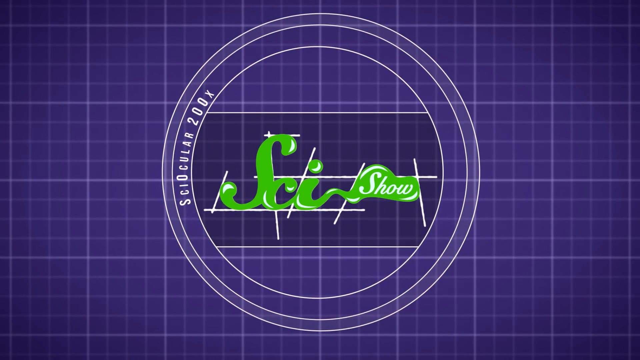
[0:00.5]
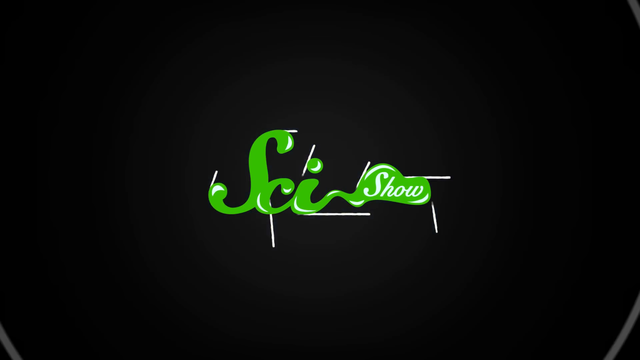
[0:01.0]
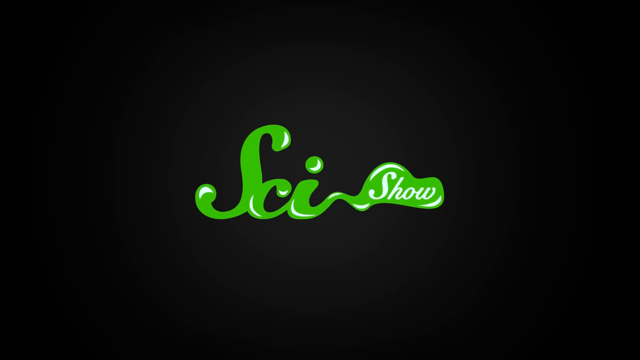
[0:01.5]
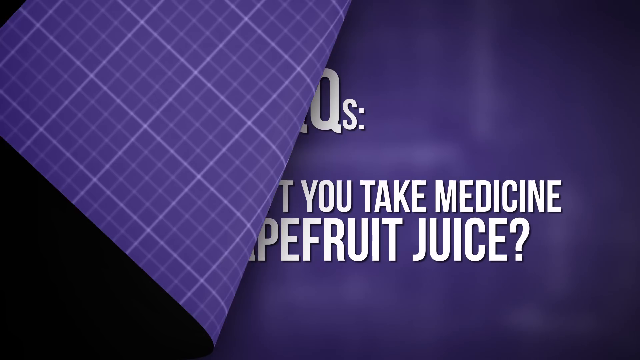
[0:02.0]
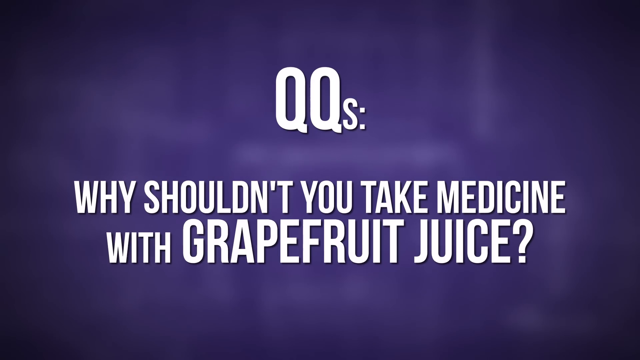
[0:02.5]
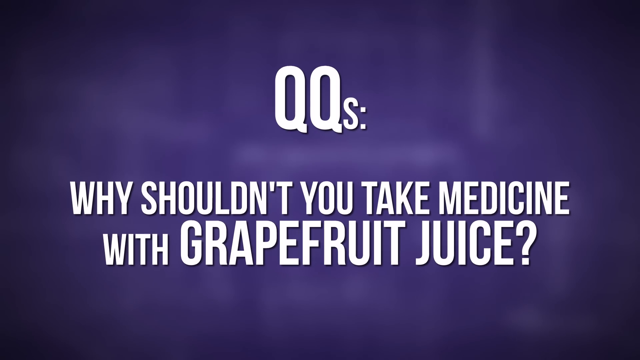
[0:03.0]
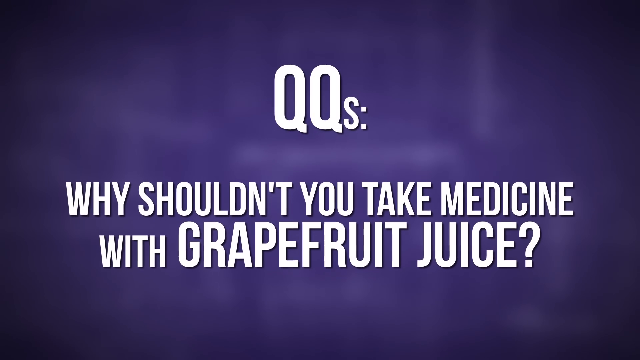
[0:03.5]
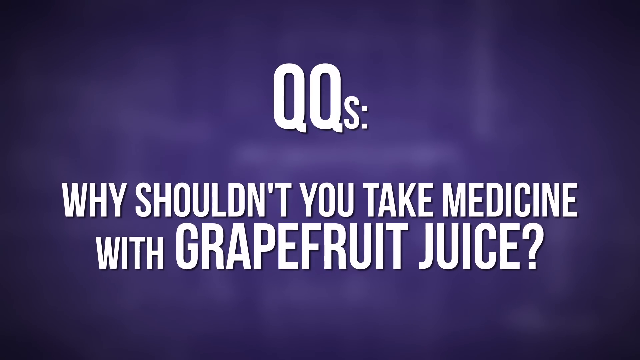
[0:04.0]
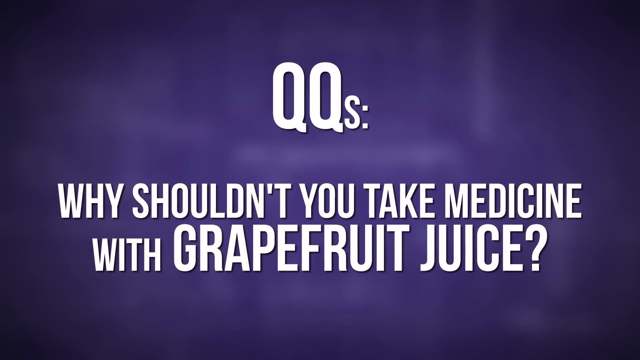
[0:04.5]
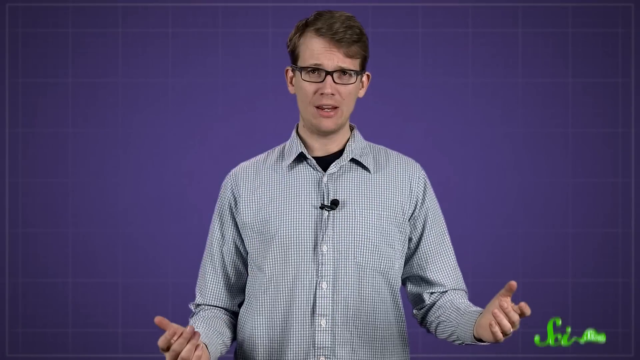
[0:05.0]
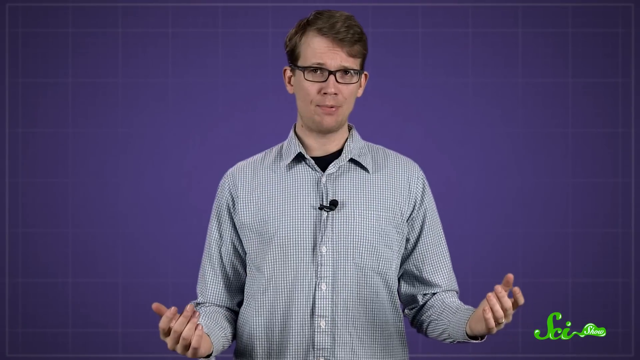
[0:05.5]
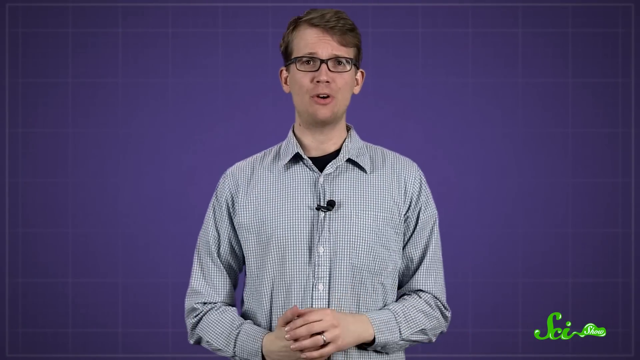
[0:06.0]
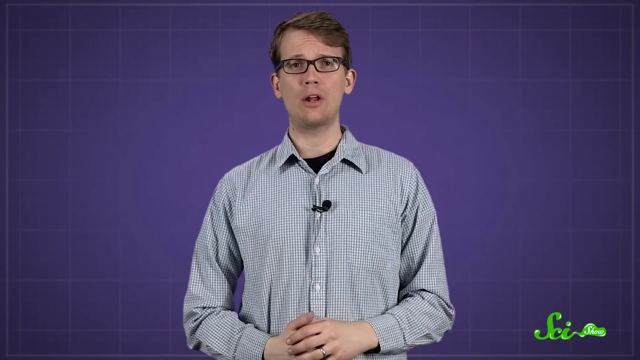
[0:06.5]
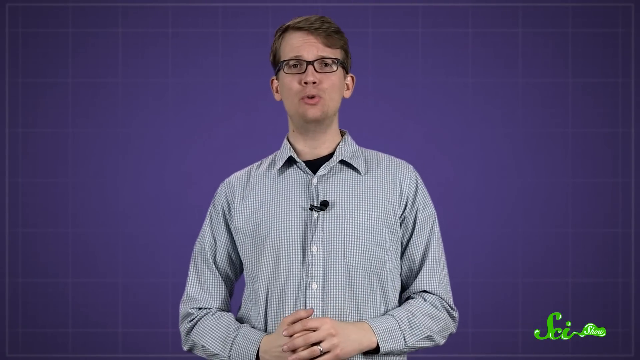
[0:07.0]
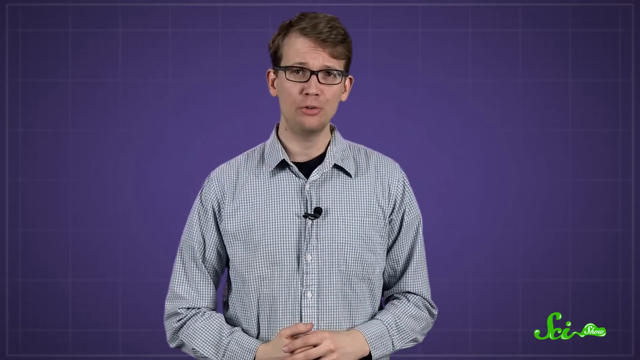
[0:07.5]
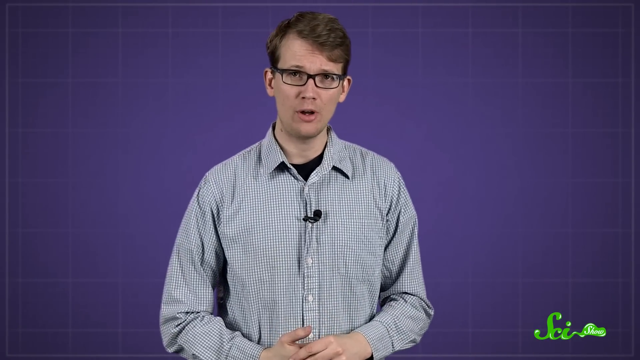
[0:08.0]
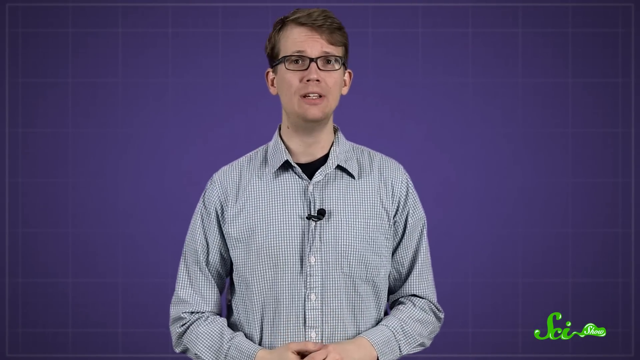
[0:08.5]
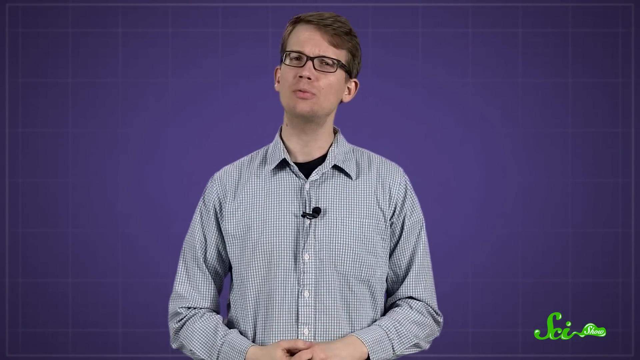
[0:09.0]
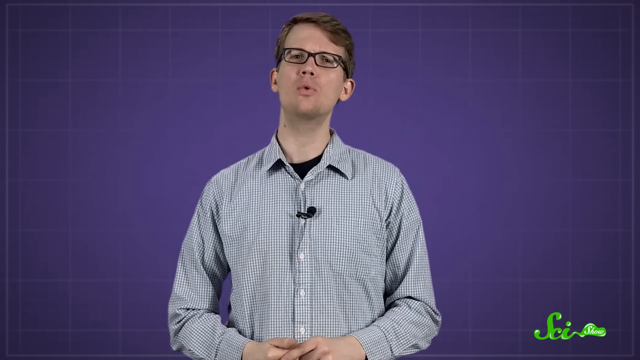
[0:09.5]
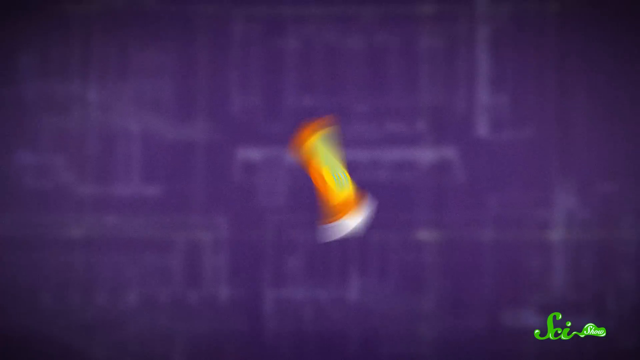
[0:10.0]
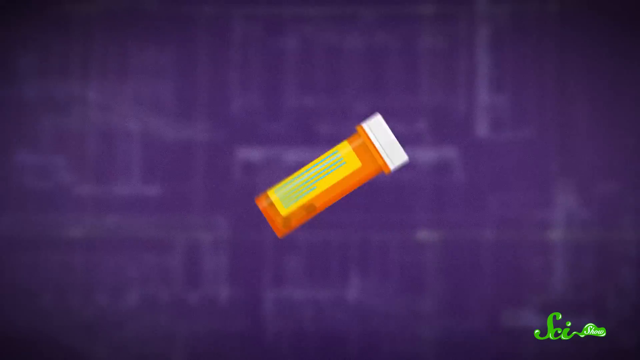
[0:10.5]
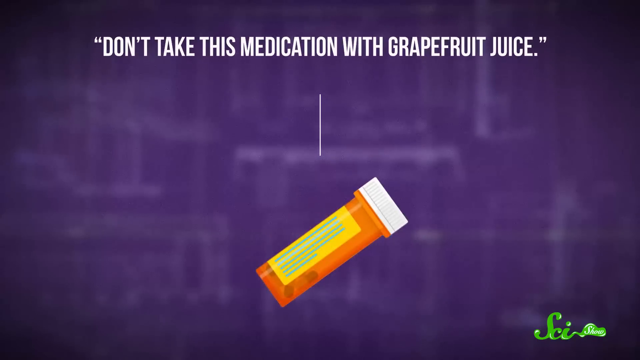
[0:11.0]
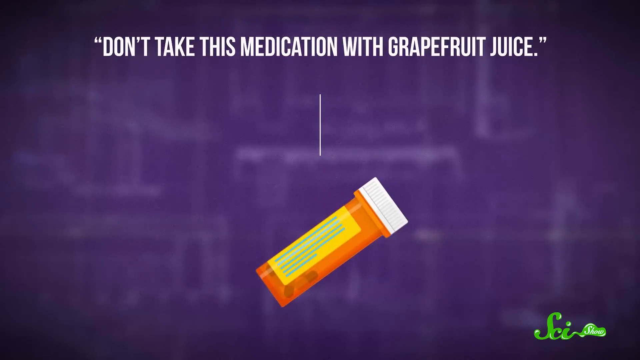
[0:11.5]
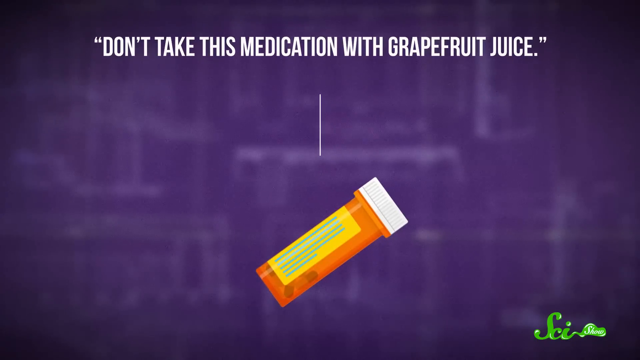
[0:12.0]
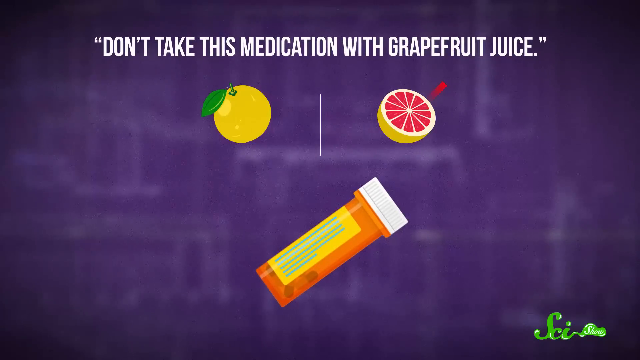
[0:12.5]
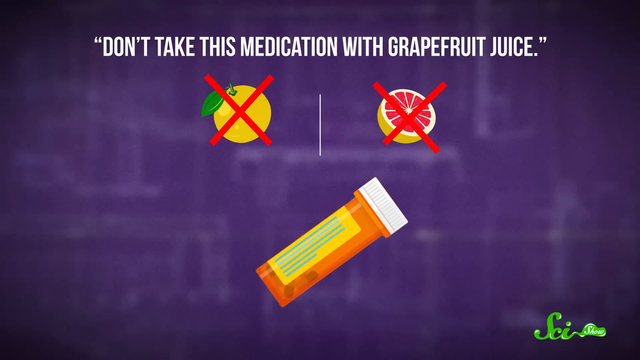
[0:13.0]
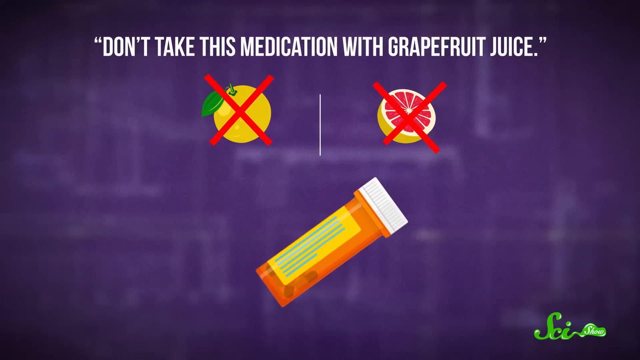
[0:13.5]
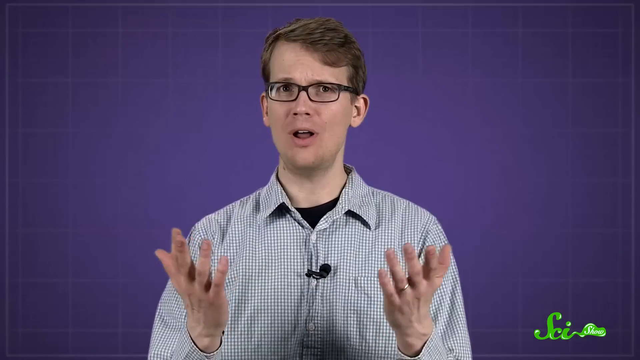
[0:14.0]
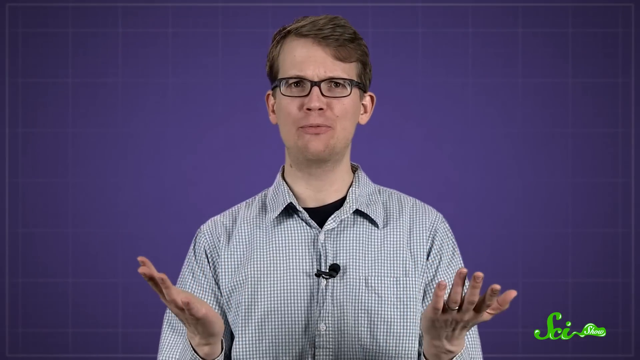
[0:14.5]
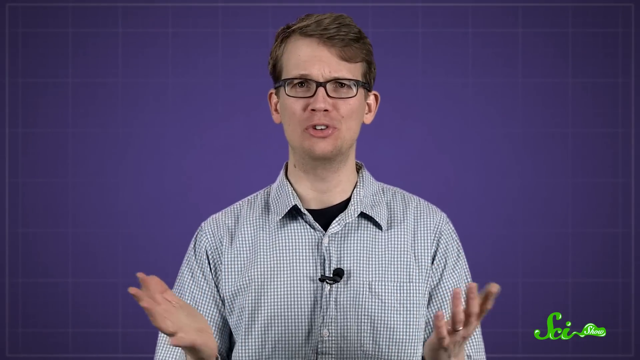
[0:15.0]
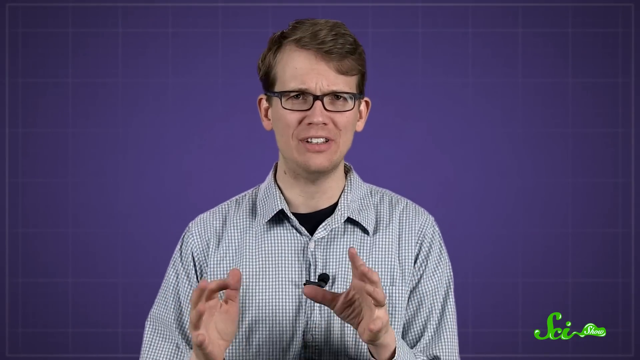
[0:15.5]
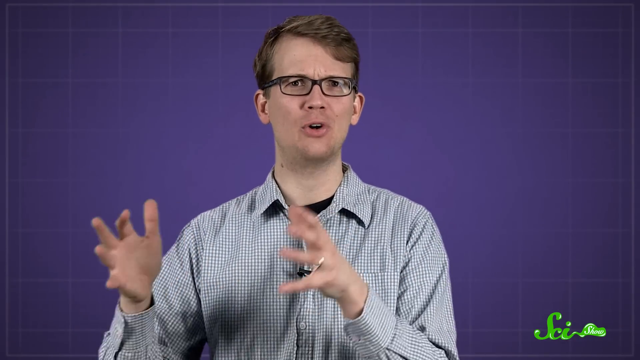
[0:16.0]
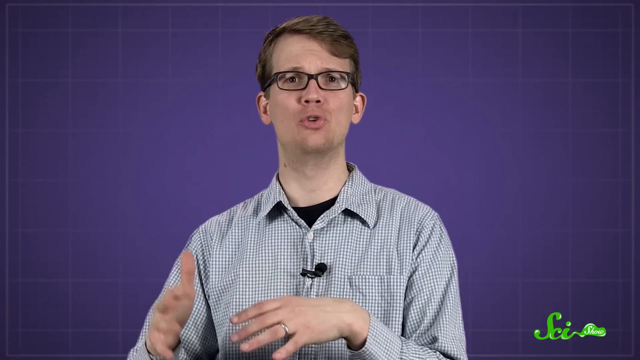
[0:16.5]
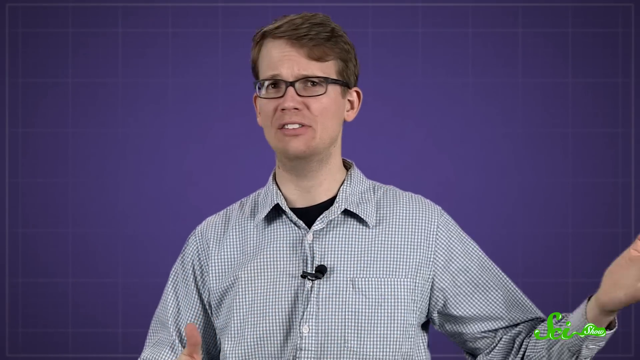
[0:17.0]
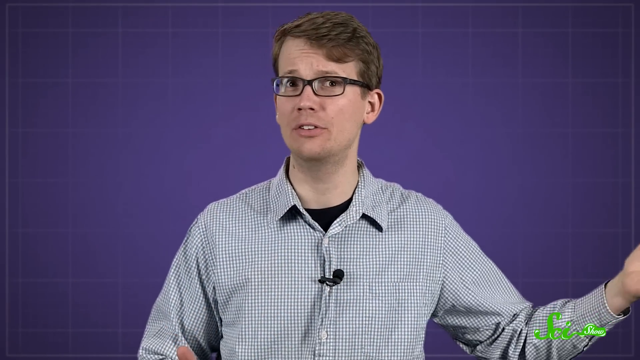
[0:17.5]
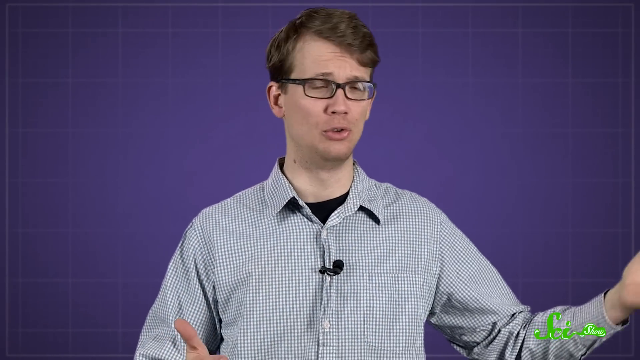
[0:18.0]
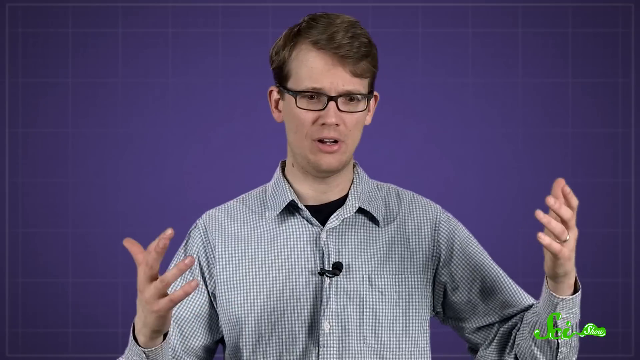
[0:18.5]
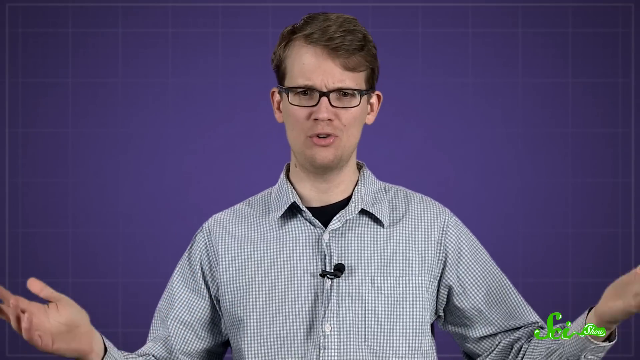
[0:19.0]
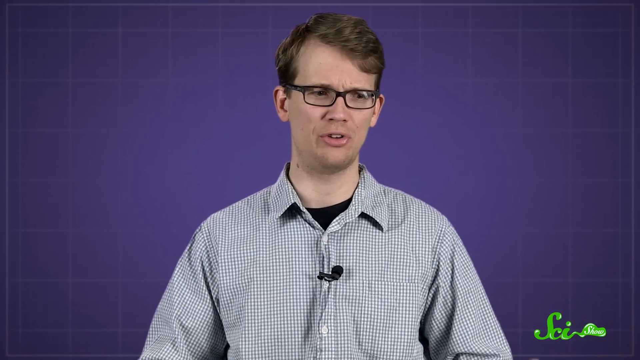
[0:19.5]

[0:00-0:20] The video opens on a purple graph-paper background: horizontal and vertical lines form tiny squares, and darker lines divide them into larger squares. Text appears inside a circle, and in green the text "the SciShow" appears. A question is posed: "Why shouldn't you take medicine with grapefruit juice?" A white man with glasses appears. His brown hair is parted to the side and kind of feathered back, combed back. He wears a button-down collared shirt with a very tiny checkered pattern over a black t-shirt, and he has a microphone.